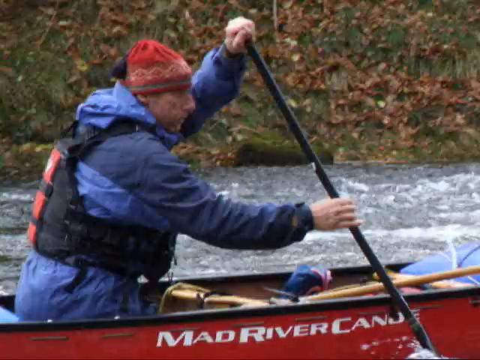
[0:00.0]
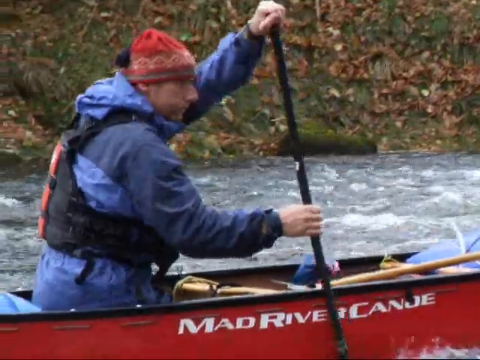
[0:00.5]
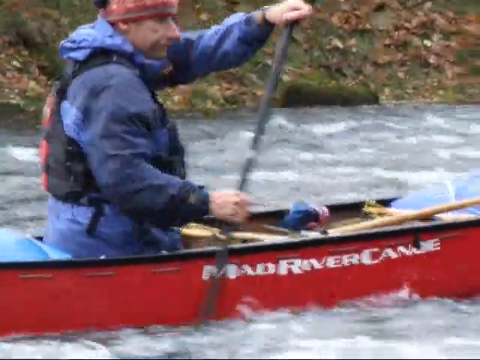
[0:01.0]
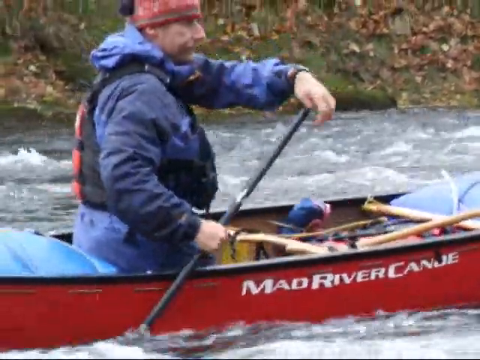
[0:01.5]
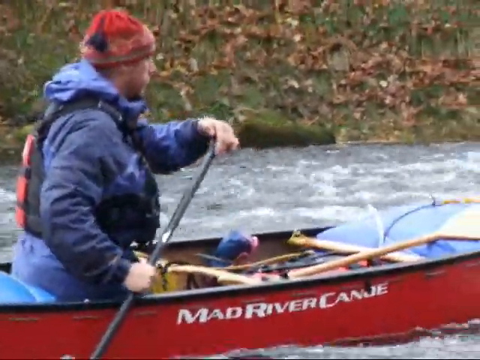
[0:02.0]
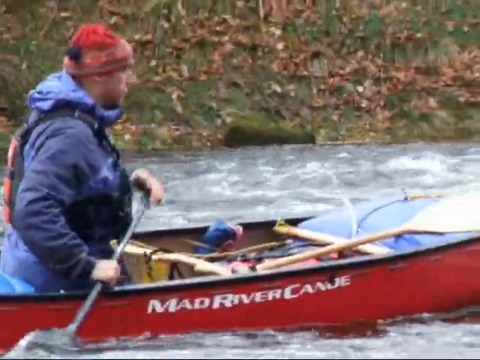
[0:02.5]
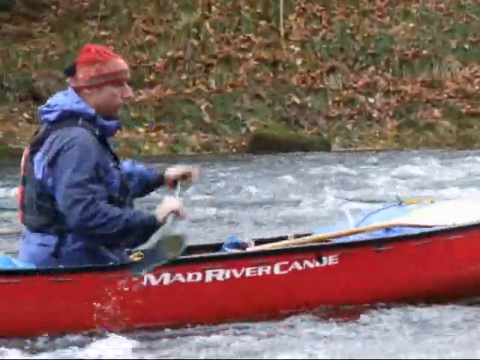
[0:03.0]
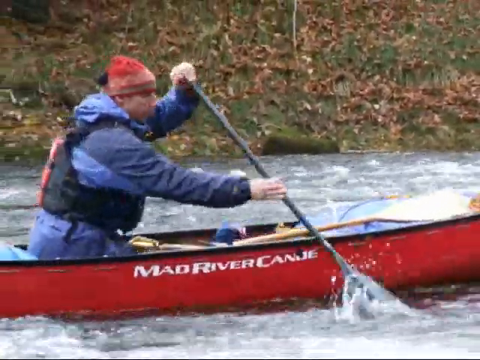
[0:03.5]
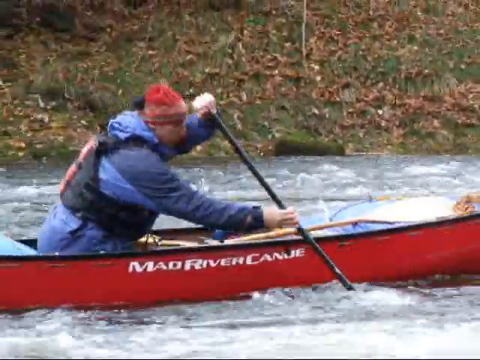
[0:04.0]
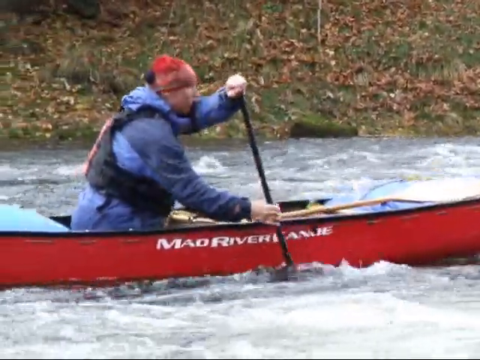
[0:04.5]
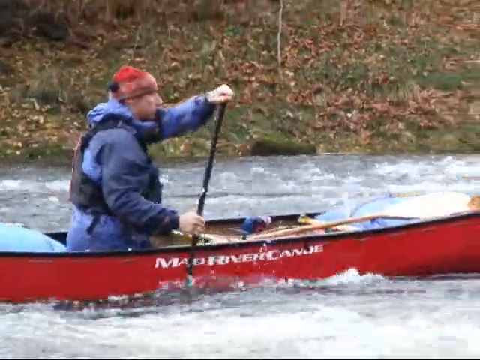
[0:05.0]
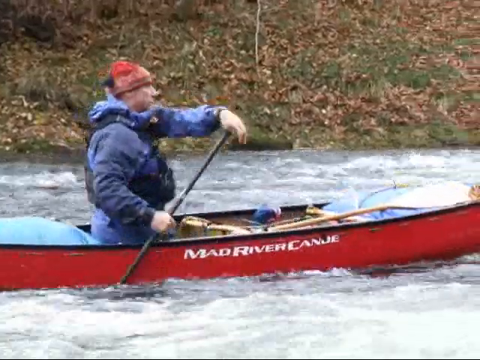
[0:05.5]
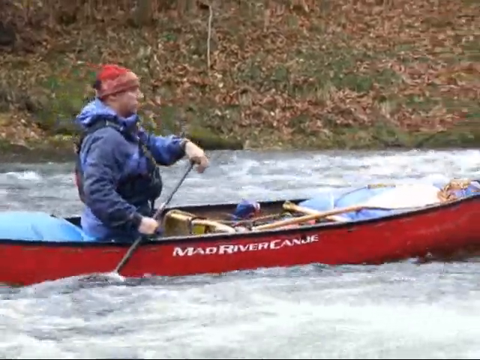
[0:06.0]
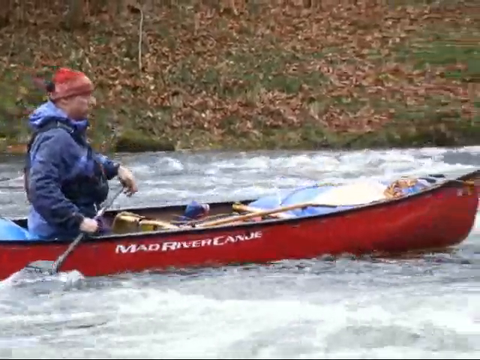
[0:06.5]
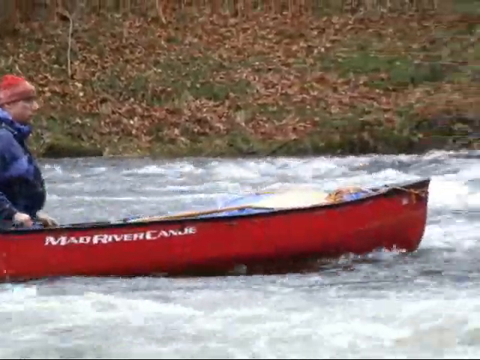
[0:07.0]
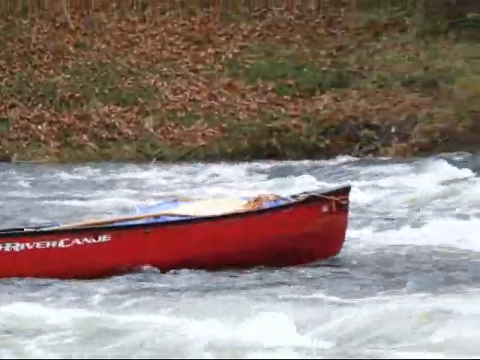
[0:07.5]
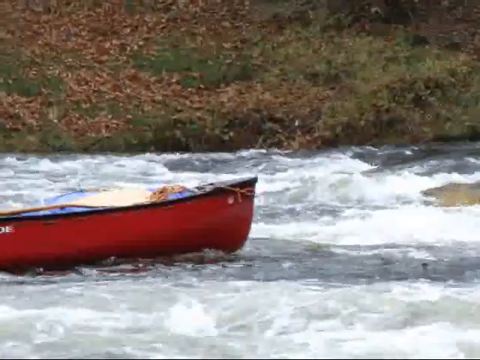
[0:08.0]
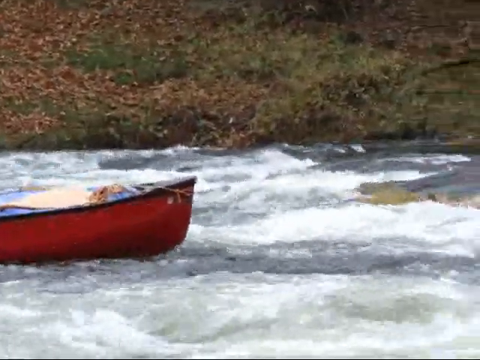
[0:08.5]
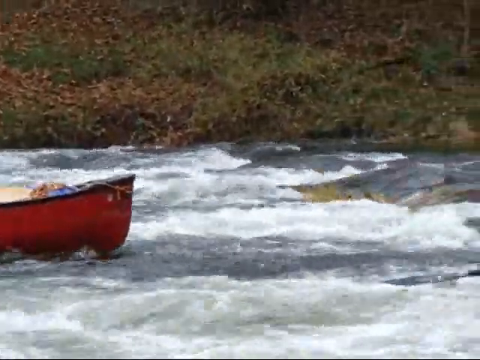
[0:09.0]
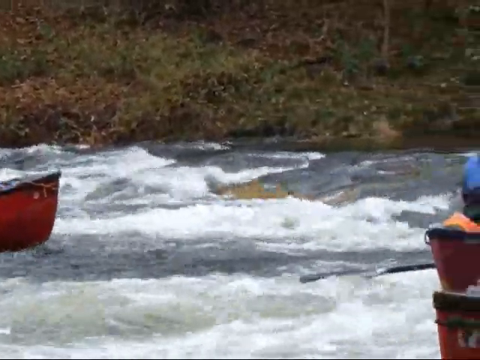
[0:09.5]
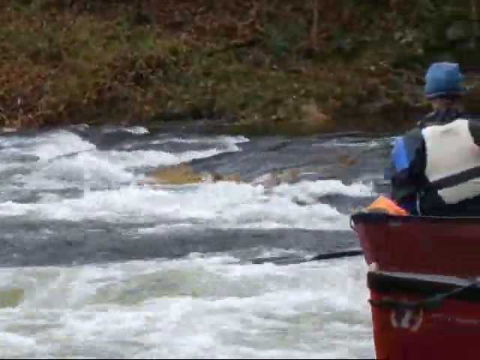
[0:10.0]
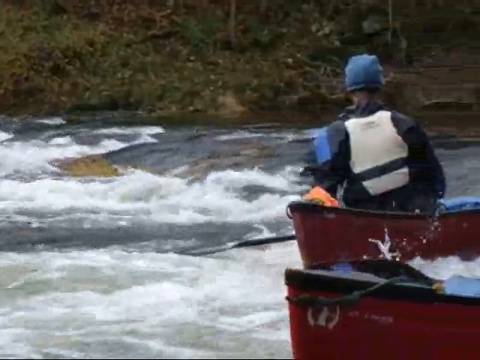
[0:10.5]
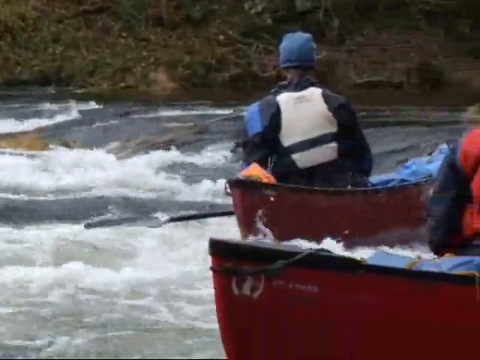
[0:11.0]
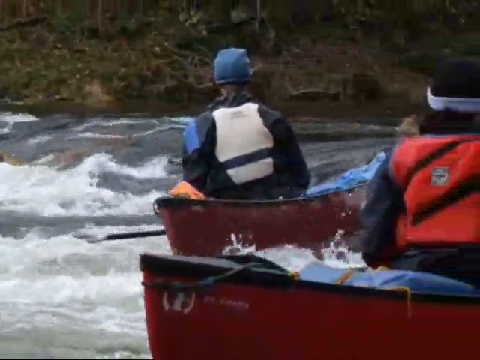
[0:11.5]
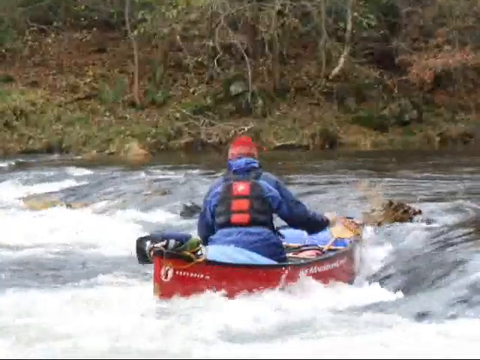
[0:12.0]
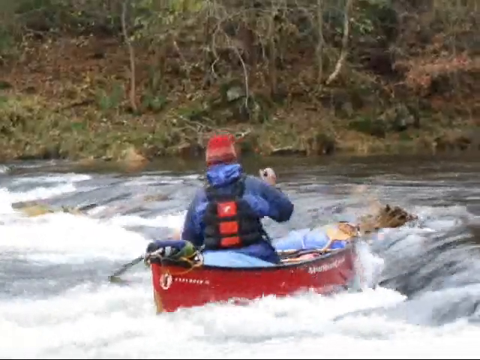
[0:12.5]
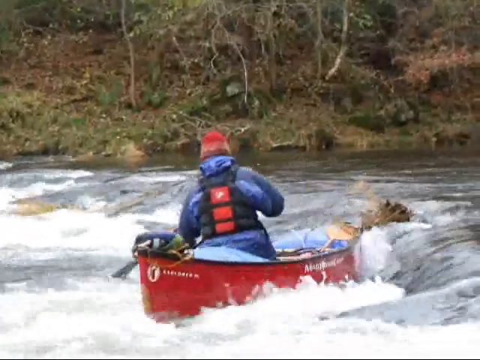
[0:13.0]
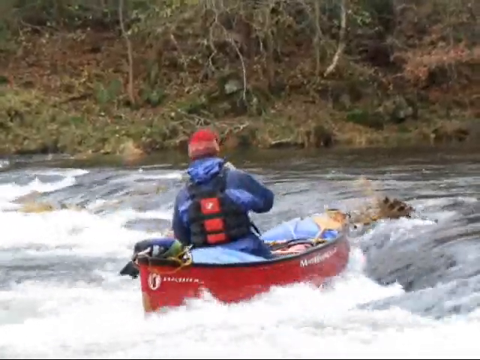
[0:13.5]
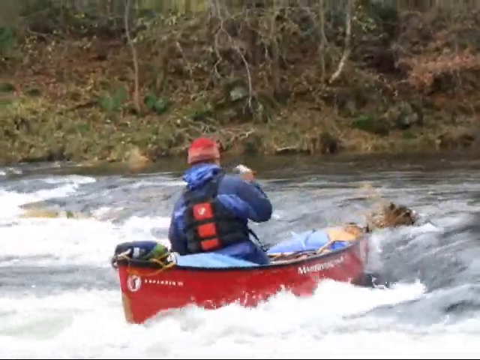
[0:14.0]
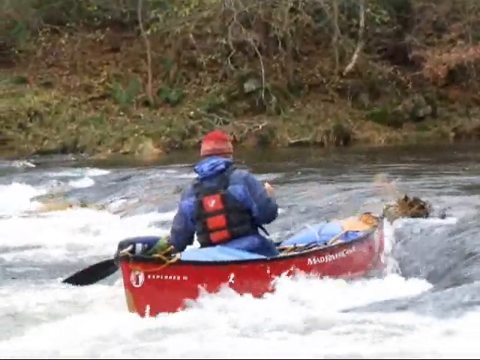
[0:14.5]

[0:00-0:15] A man canoes against the river, with the strong current going against him. The text "mad River Canoe" is visible. Besides him there are four other people, who look like they are in trouble and appear to be stranded. It looks like a very cold day. The water seems to be threatening to tip them overboard, and it looks like they might flip over.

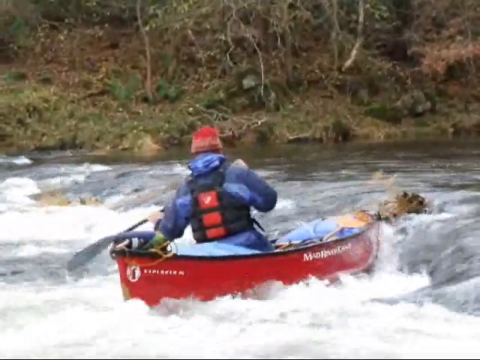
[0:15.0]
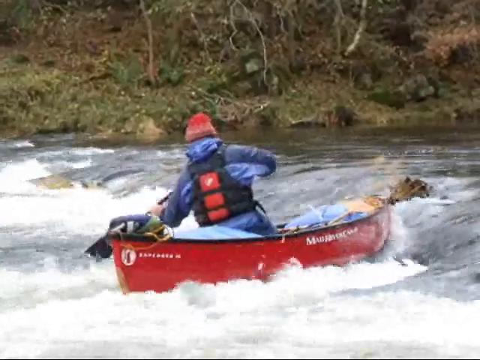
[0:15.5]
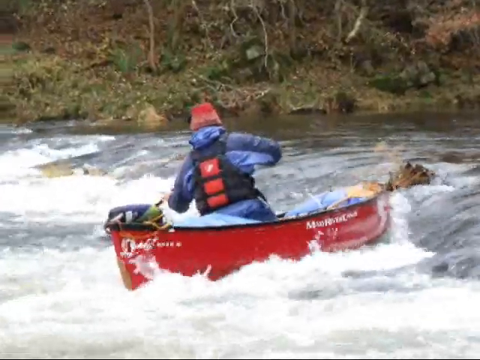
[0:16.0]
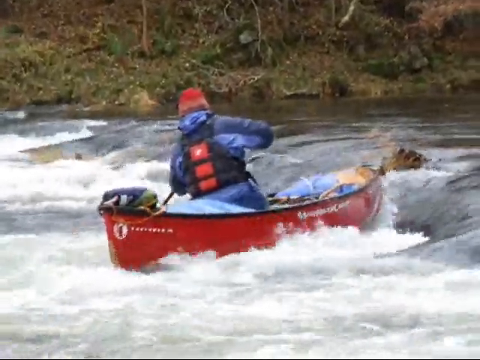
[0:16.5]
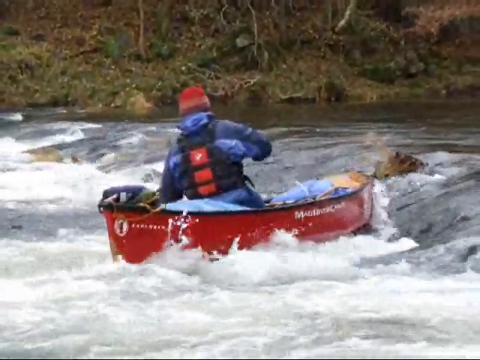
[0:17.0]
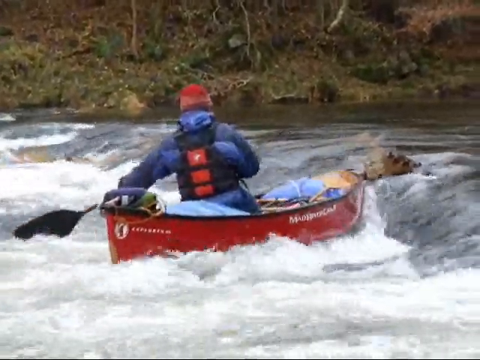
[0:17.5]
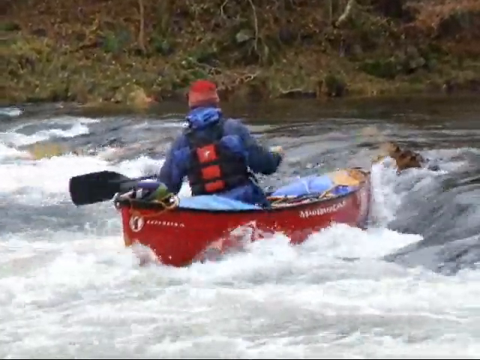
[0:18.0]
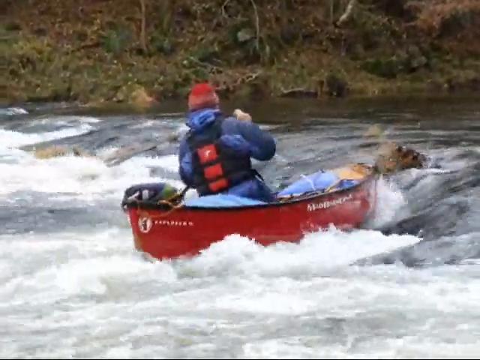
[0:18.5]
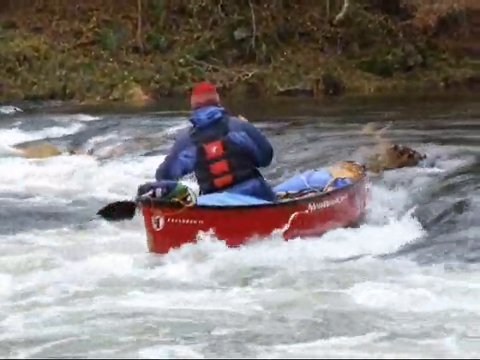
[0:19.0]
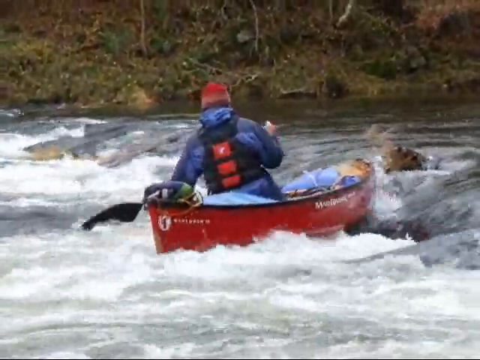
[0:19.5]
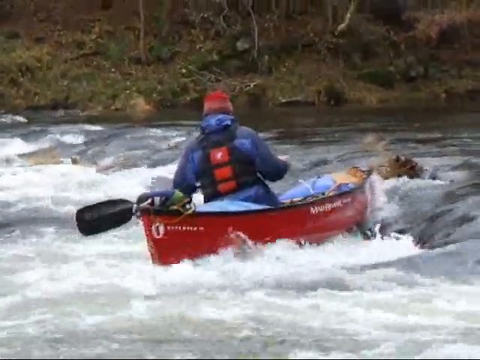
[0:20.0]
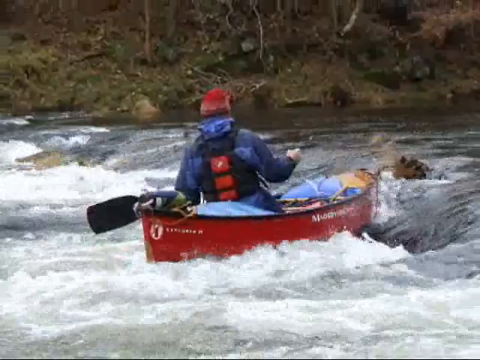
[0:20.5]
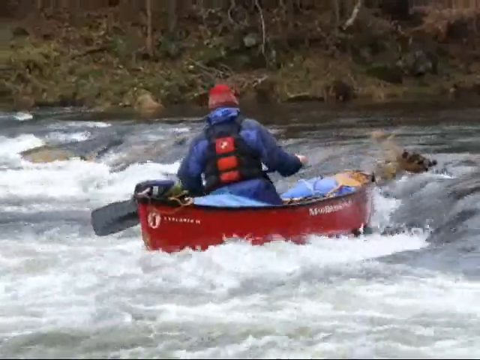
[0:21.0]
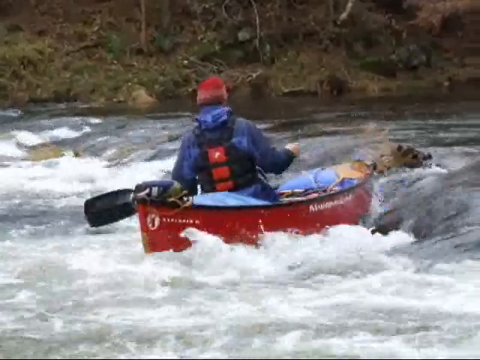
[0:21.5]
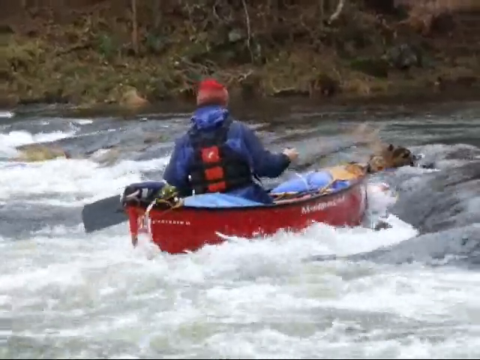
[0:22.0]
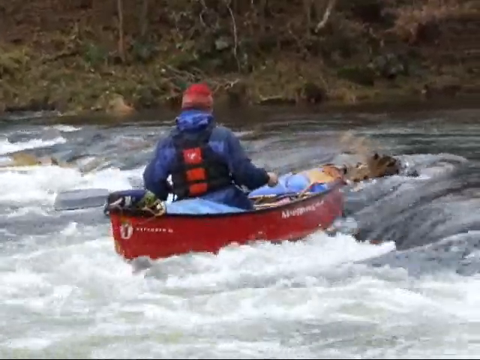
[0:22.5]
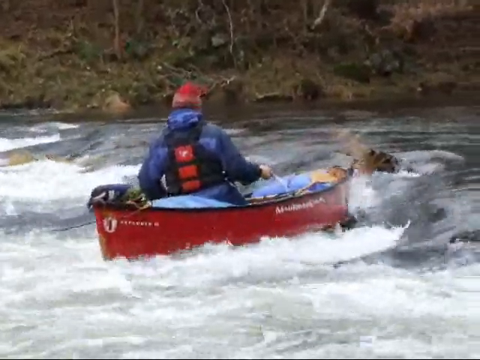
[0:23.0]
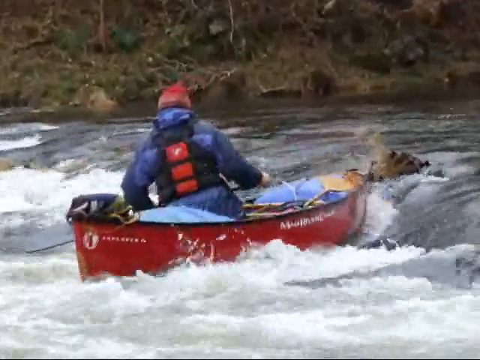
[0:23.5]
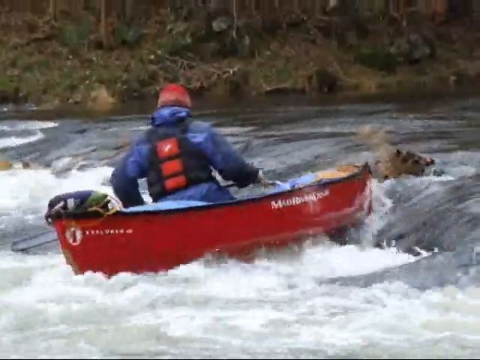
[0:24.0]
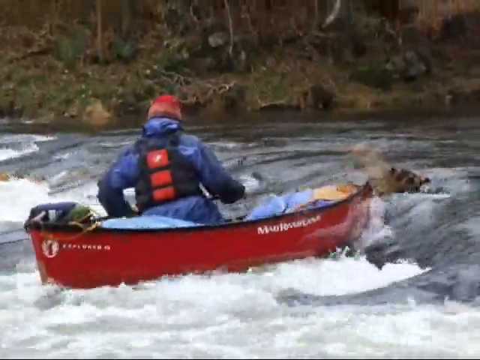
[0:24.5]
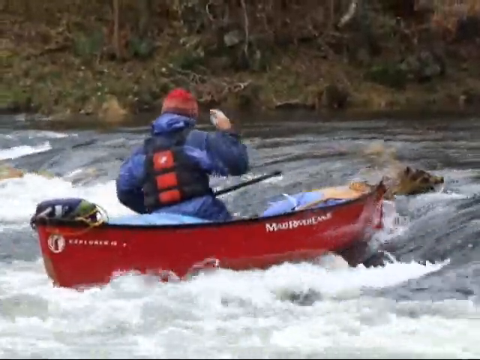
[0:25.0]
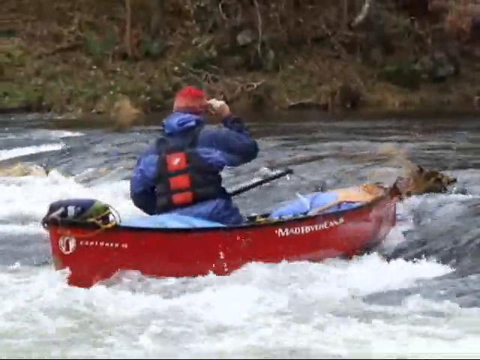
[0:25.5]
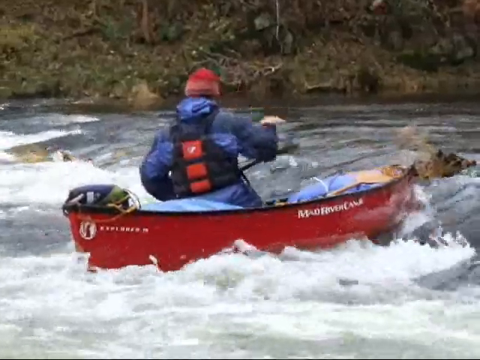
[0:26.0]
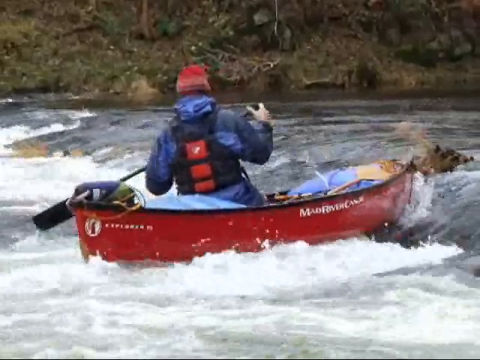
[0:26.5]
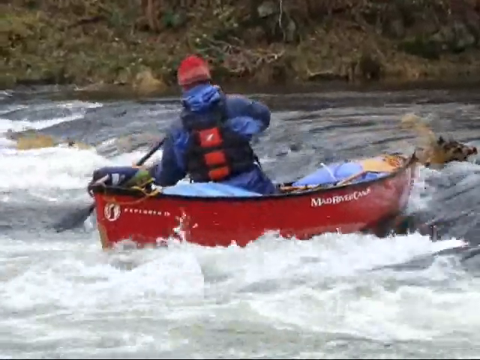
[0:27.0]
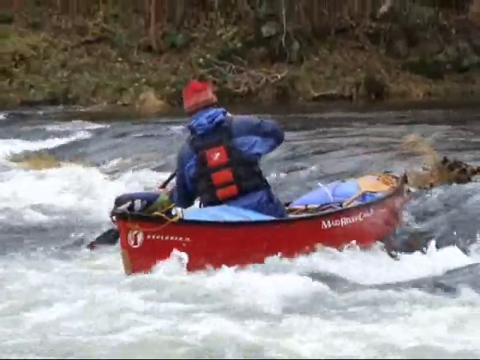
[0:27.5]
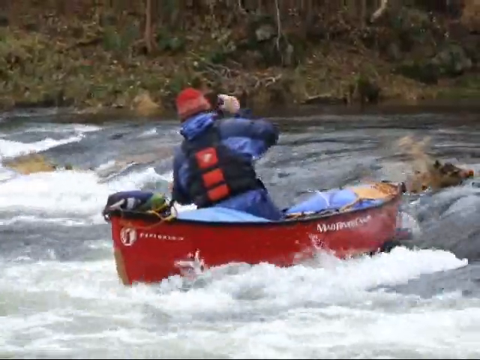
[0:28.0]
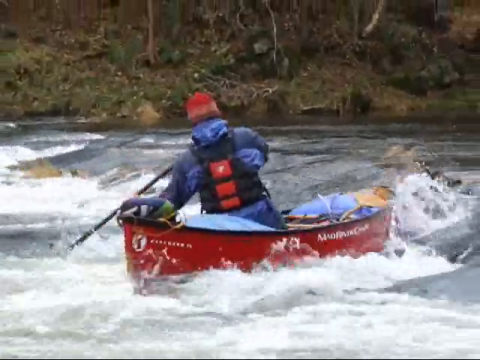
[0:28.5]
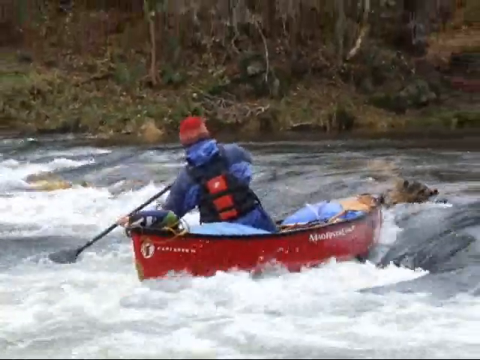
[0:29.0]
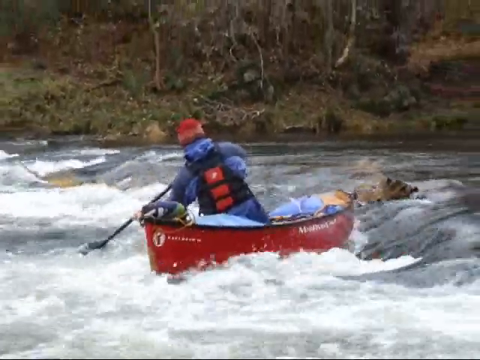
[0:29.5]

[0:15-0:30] One man is alone in a canoe on the water, surrounded by green trees. The water rushes at him, and it looks like he might flip over; he appears to be in big trouble. He digs with his paddle, trying very hard to get away, but stays stuck right where he is. He wears a red hat and a blue jacket, and the canoe is red and black. The situation looks quite scary and dangerous.